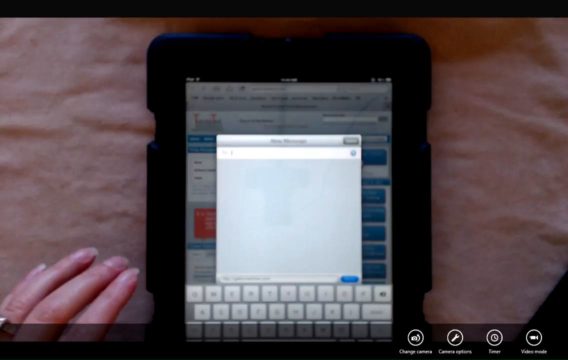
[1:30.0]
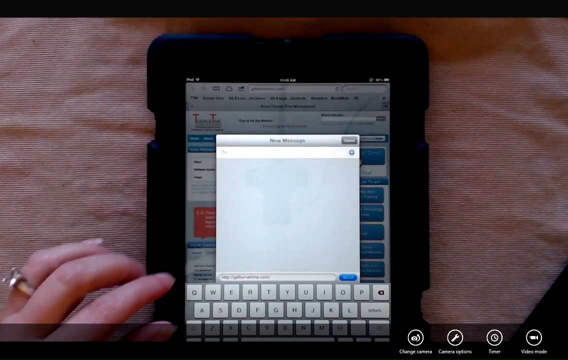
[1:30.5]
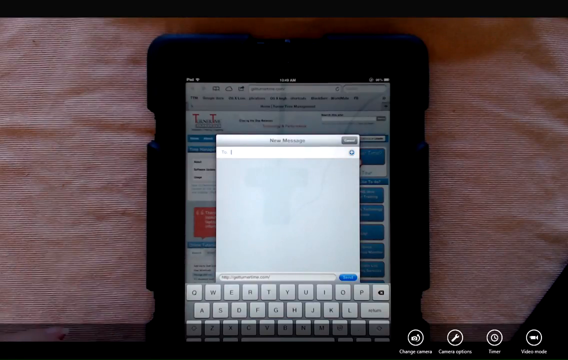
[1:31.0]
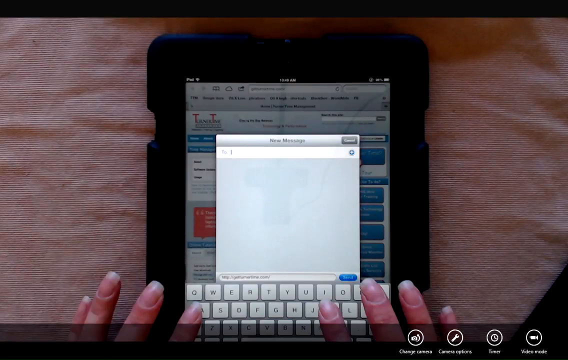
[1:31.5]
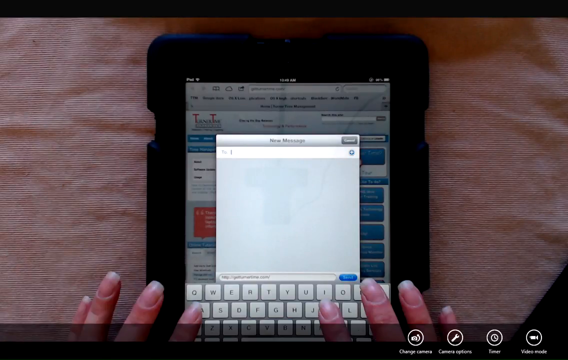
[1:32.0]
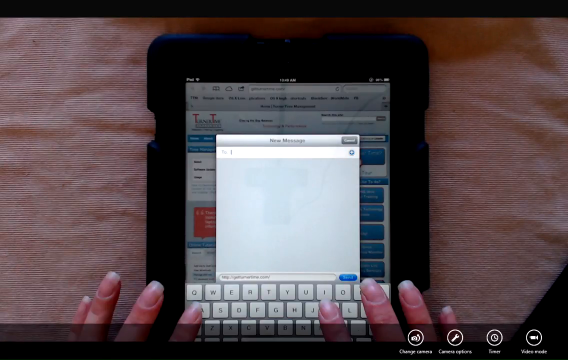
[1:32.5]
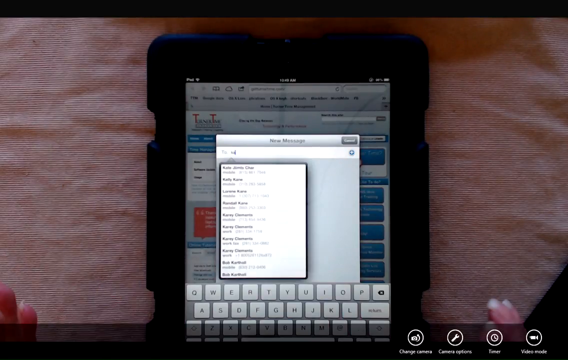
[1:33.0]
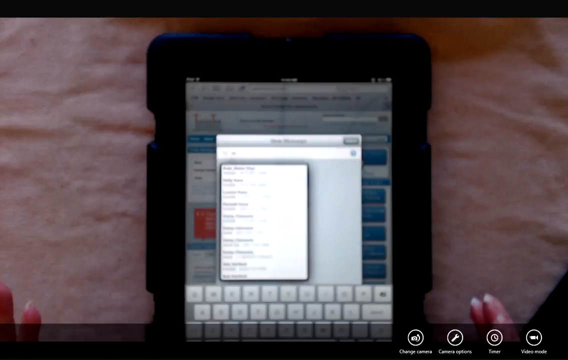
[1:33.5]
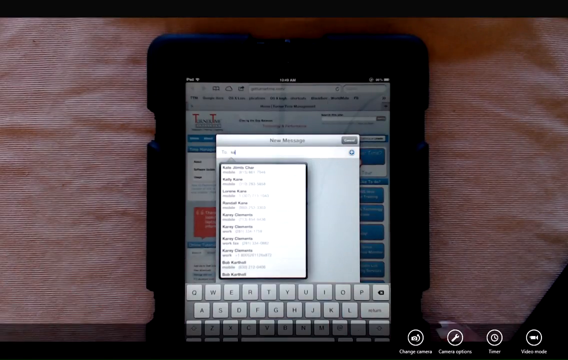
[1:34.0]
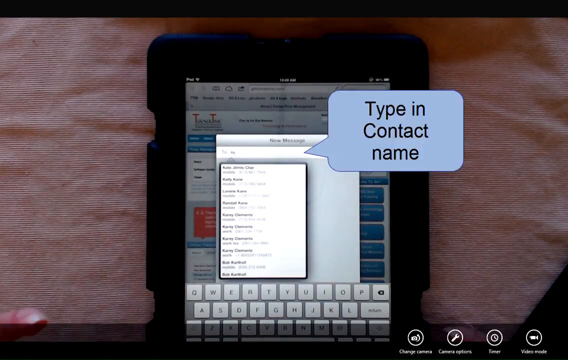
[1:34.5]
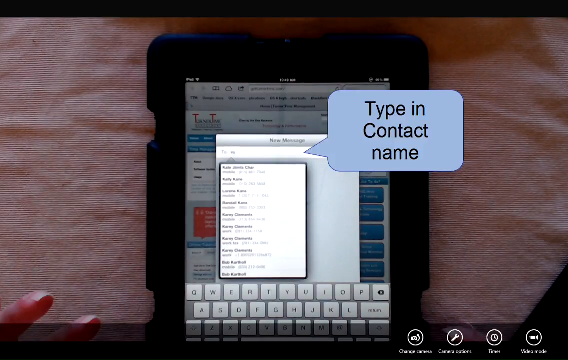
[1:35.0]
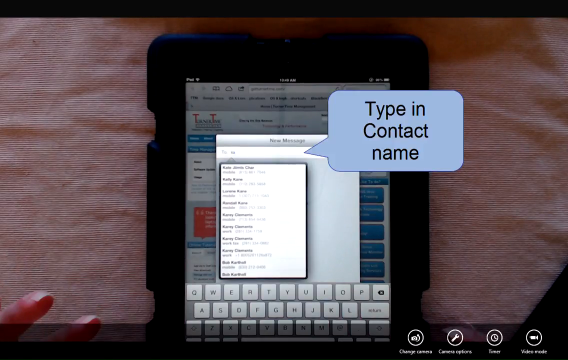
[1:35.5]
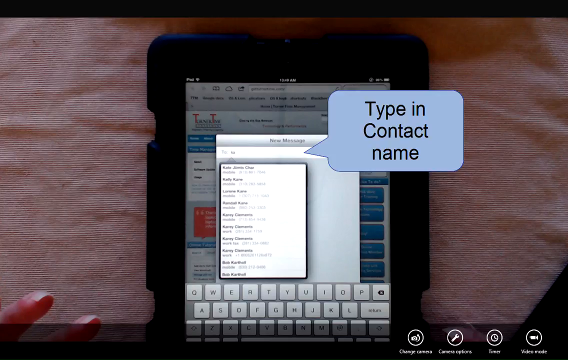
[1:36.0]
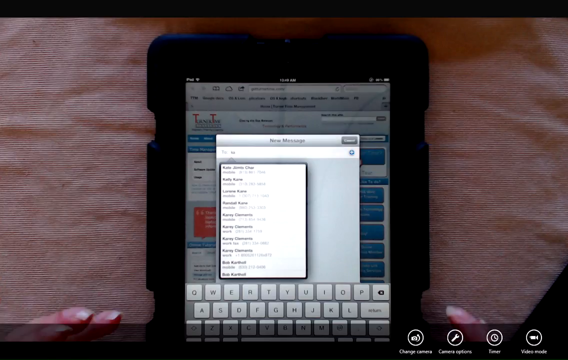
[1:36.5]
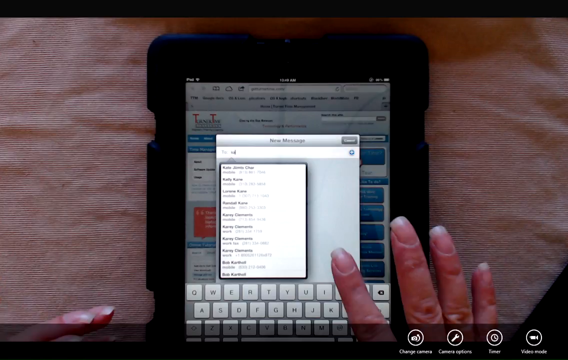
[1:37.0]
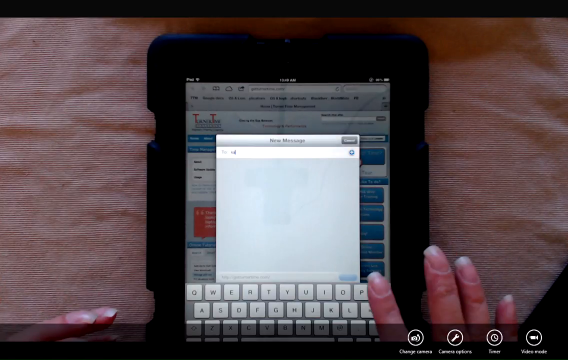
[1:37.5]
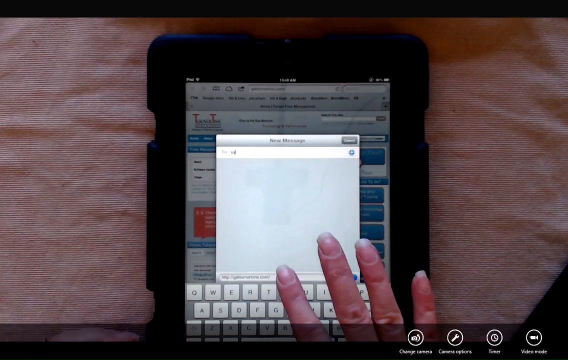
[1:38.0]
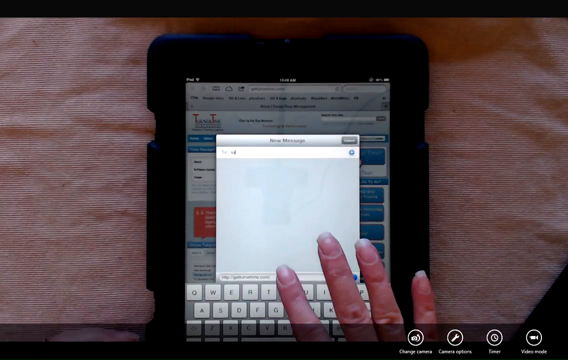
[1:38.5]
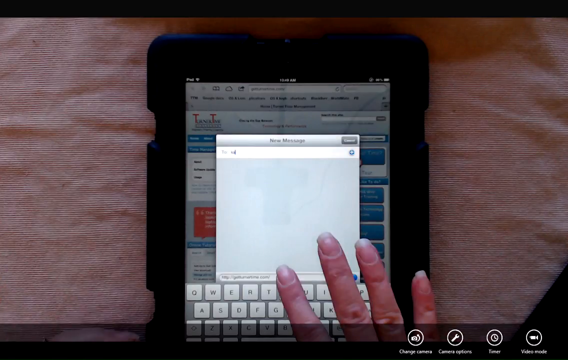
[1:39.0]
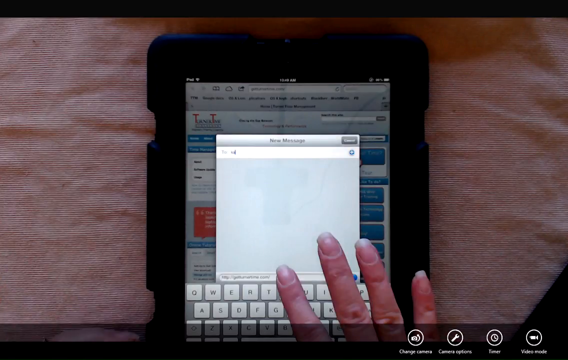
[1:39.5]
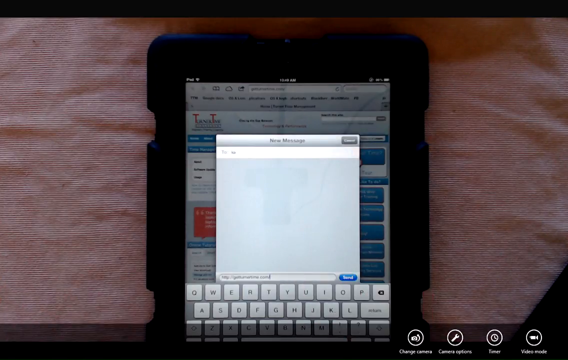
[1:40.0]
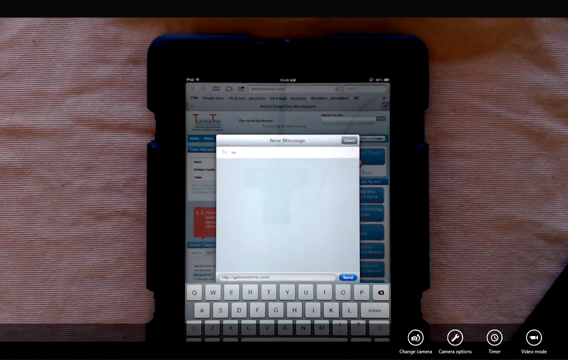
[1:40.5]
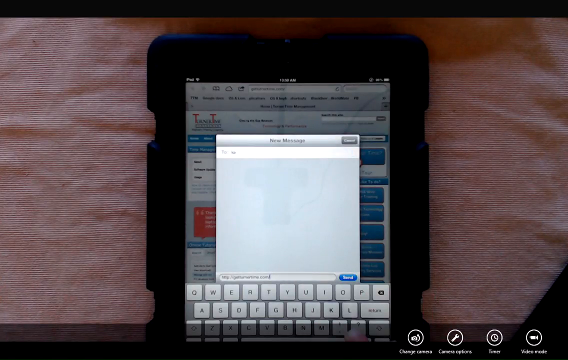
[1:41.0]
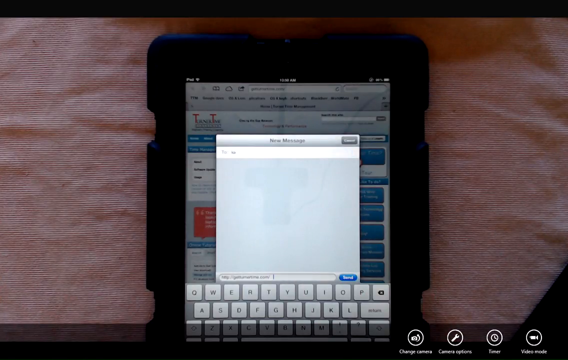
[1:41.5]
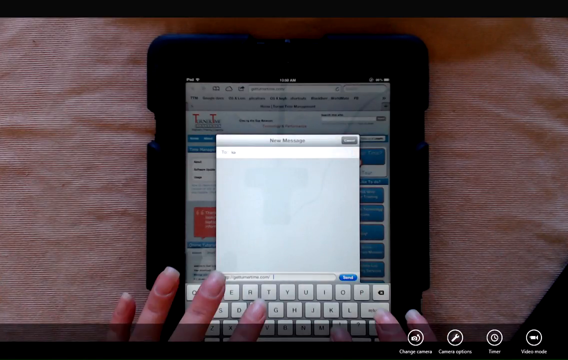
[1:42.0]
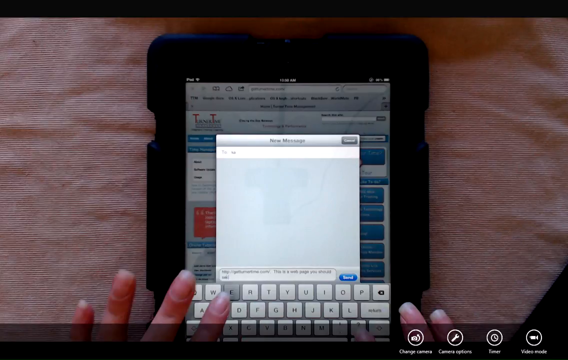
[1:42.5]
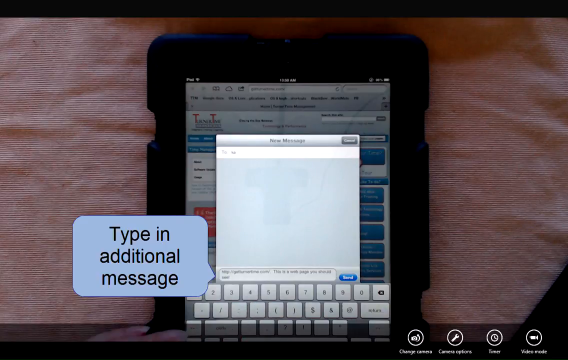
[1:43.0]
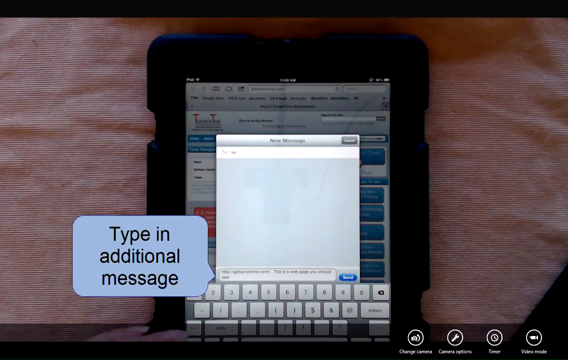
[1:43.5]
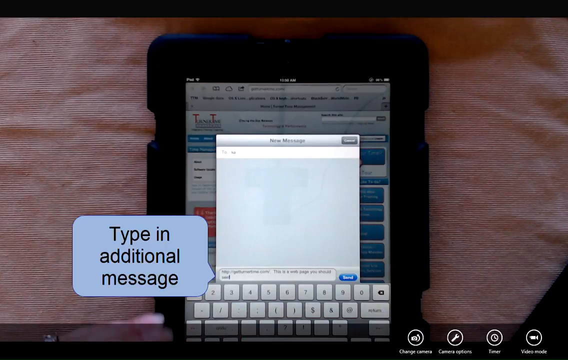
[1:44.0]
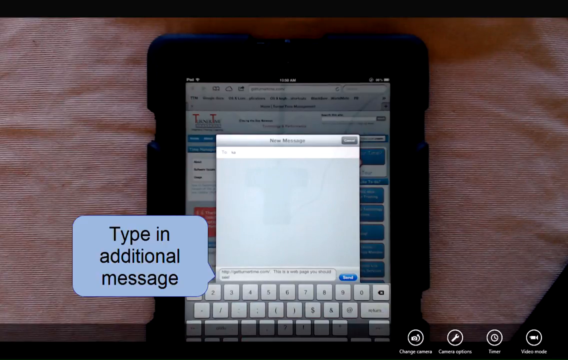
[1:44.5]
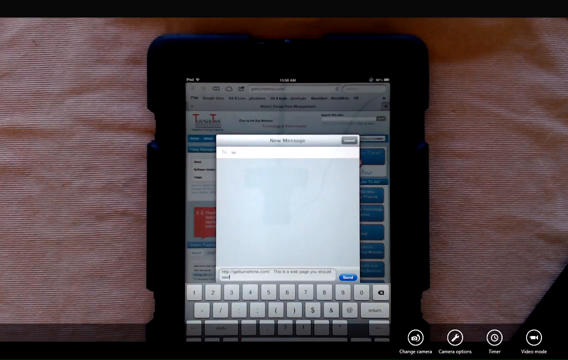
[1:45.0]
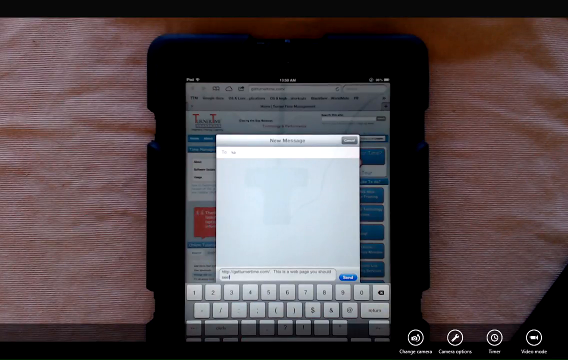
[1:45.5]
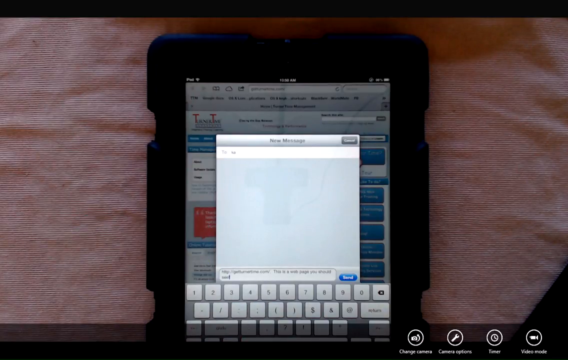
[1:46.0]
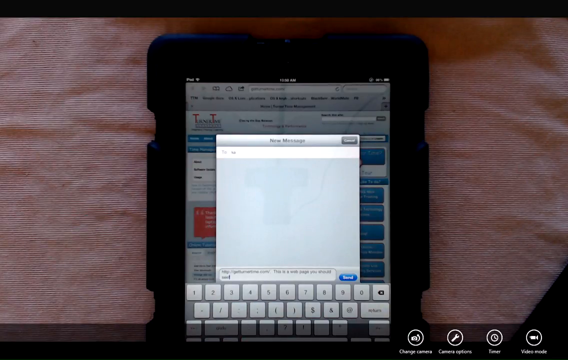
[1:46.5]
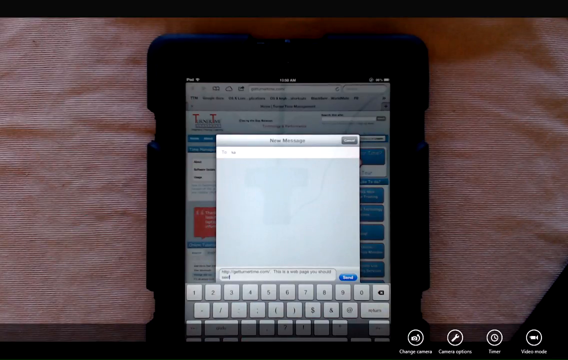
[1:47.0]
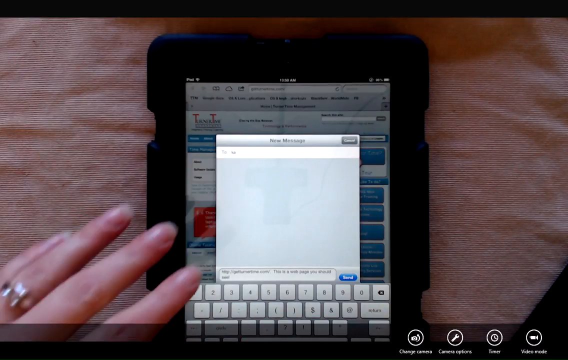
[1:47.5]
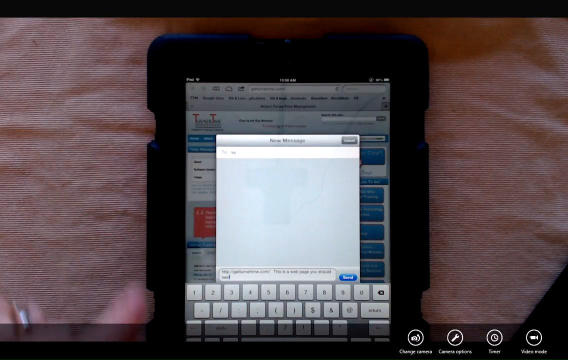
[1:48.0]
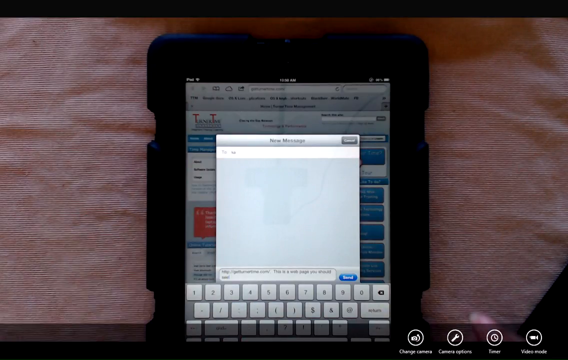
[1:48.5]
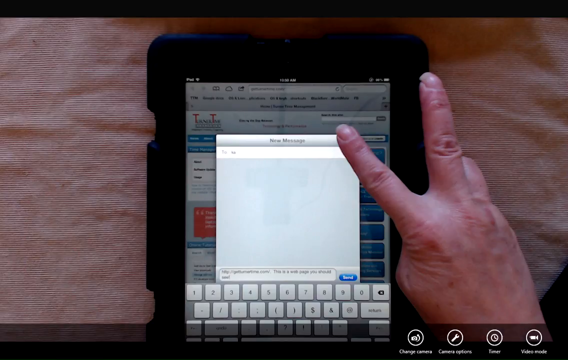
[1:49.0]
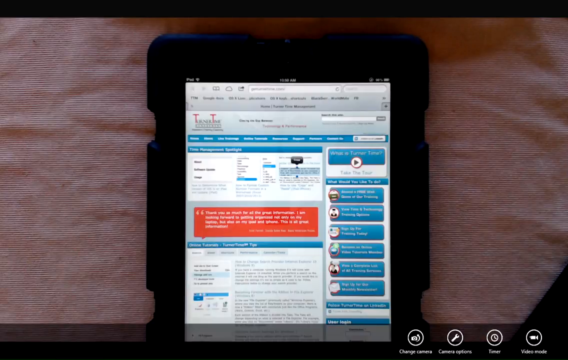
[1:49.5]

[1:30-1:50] The shot starts with the tablet and the person's left hand, with four fingers visible from about halfway up but not the palm. On the device's screen there is a section of text in the background as well as a pop-up window. The fingers move slightly away from the device before the hand moves away completely; a ring is visible on the ring finger of the left hand. After a second, both hands return into view from the bottom of the screen with palms facing down and fingers extended, and the fingers click some keys on the screen, bringing up a pop-up window with different options. The hands move away, then the left hand appears again with just the fingertips, and a pop-up on screen says "type in contact name."